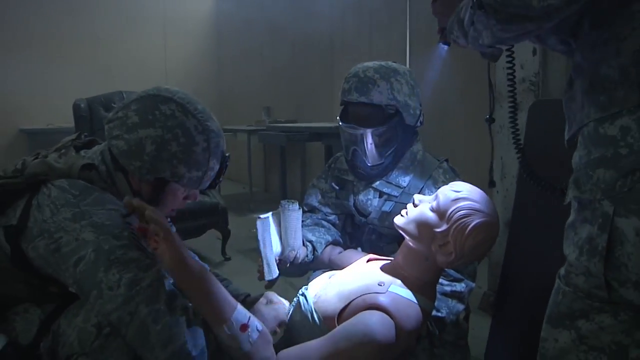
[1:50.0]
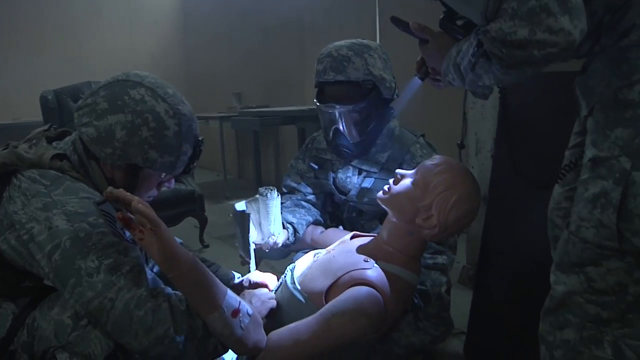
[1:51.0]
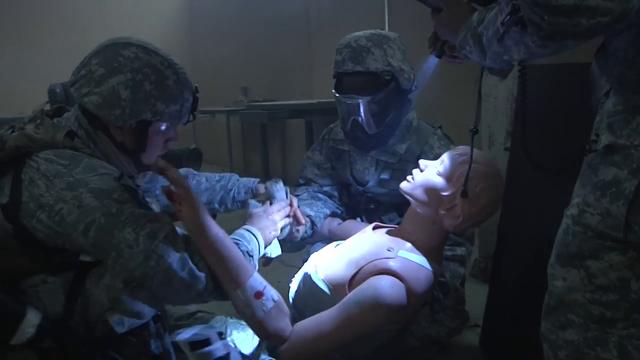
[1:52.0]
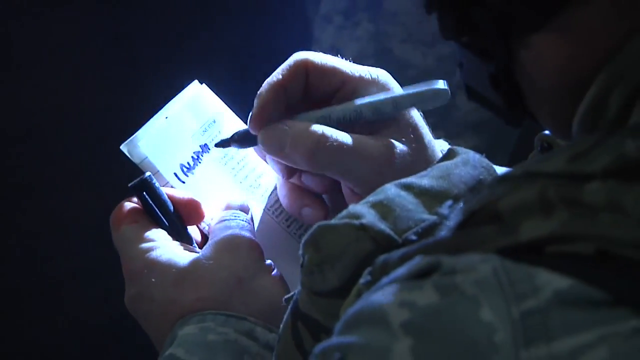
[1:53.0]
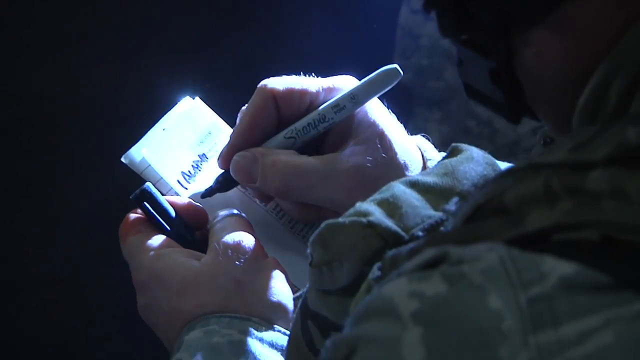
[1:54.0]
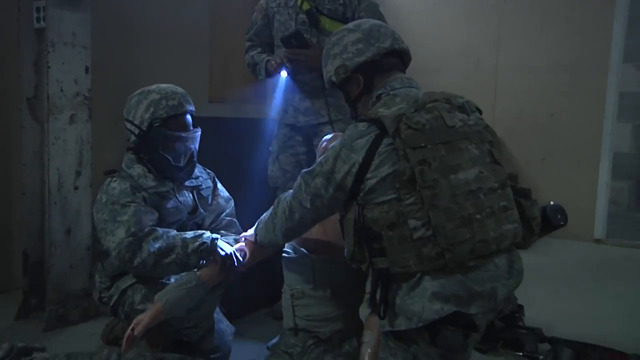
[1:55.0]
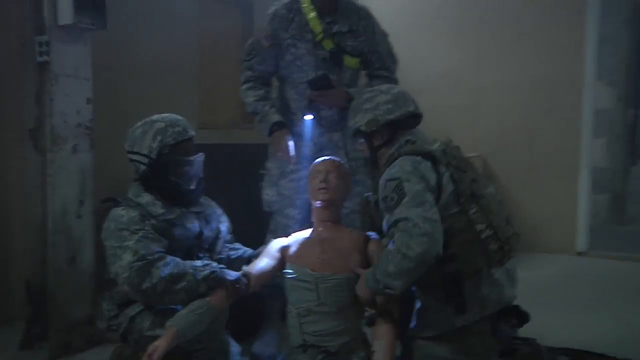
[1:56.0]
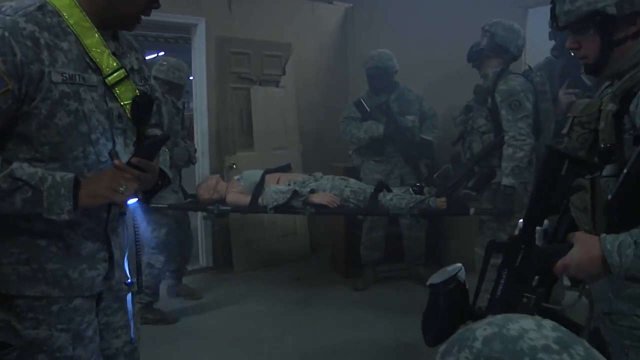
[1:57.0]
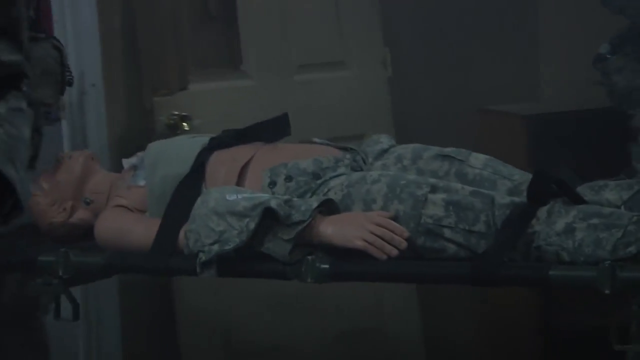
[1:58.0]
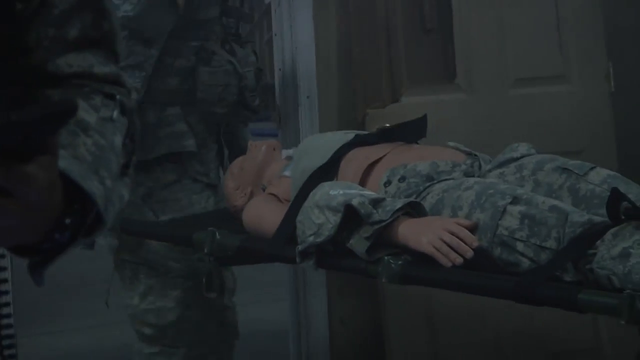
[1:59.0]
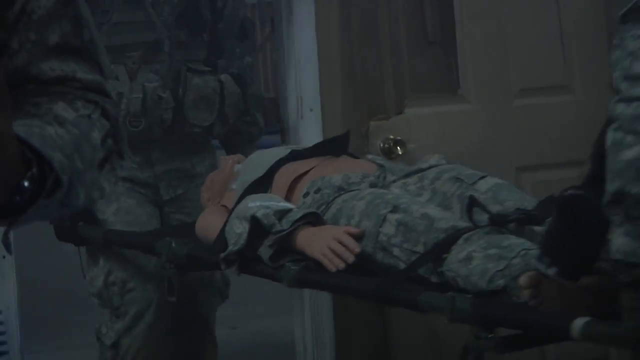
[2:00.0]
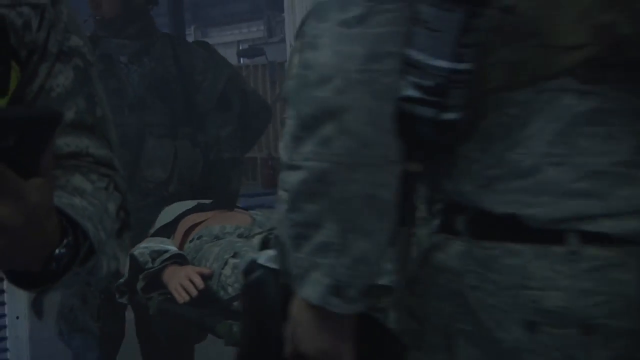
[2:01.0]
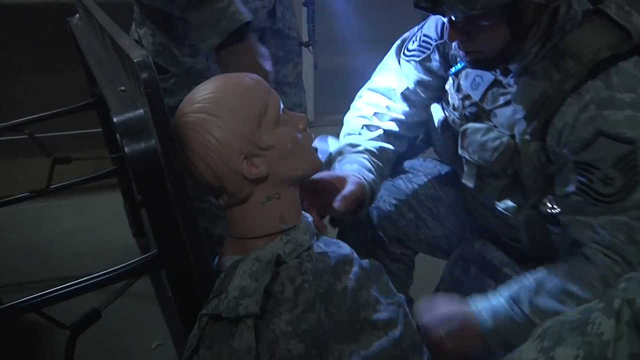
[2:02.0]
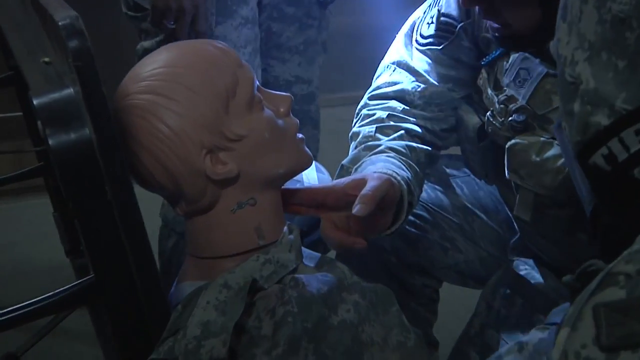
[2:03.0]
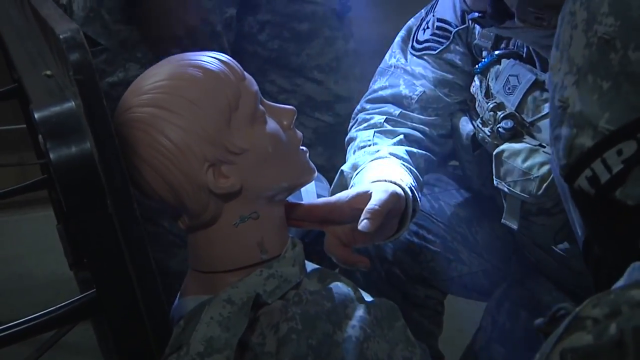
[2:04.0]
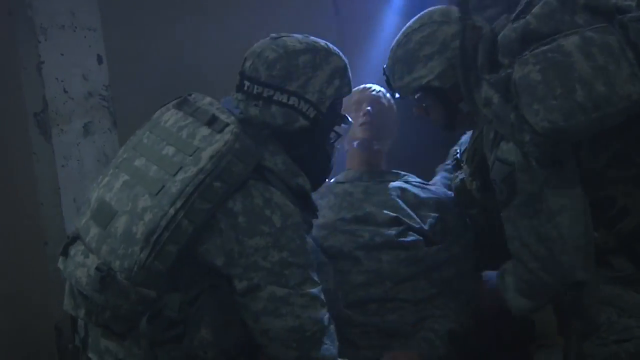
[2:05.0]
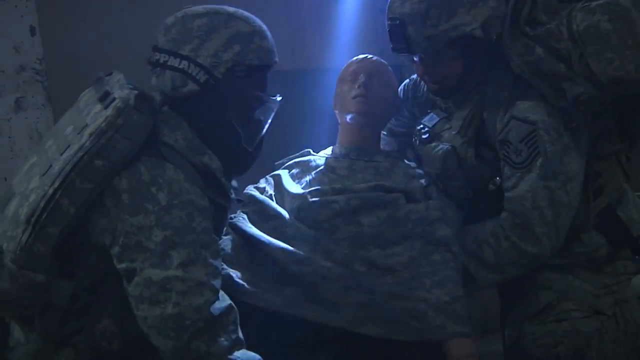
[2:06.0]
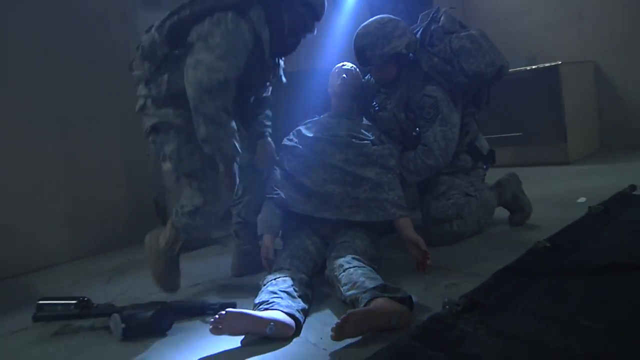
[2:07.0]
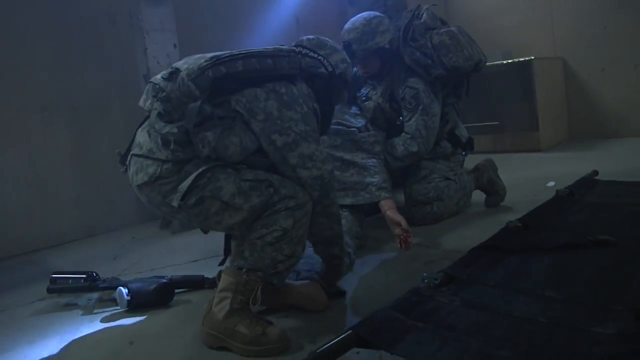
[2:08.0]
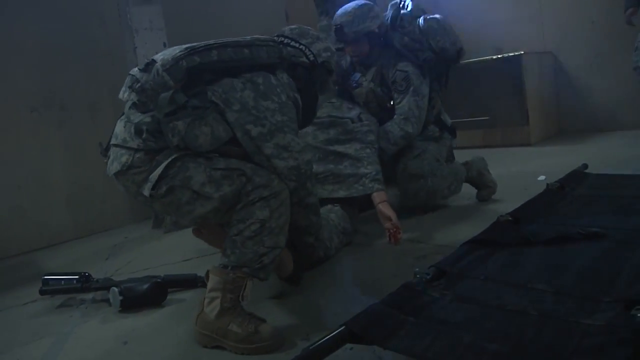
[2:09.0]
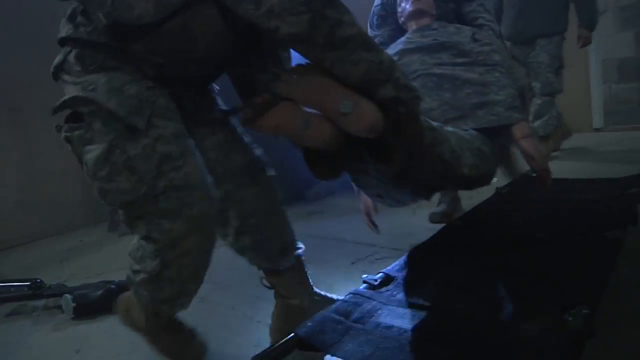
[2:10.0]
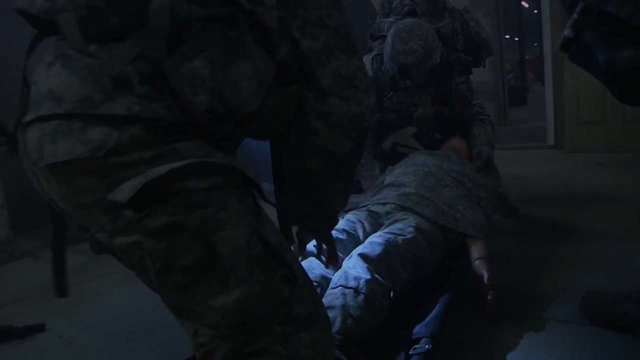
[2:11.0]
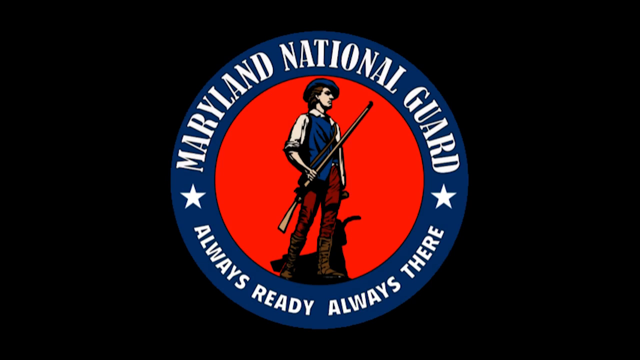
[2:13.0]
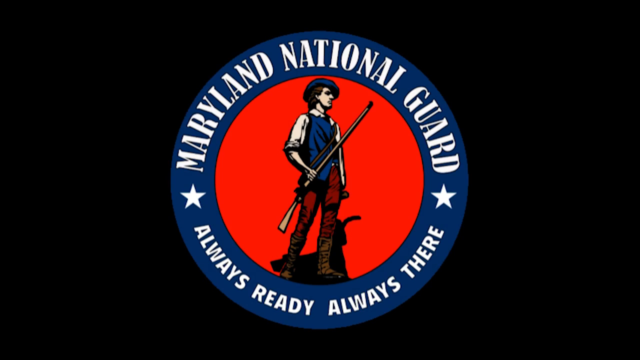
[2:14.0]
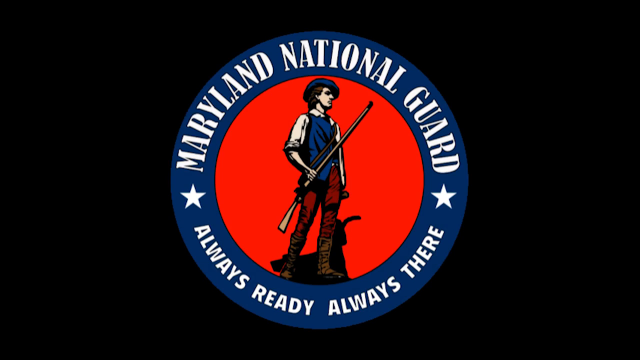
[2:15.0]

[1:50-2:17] Three soldiers attend to the wounded soldier while a fourth stands nearby holding a torch for them. Another soldier holds a paper and a marker and writes on the paper. The three soldiers continue to assist the wounded soldier as they lift him up; more soldiers come, they put him on a stretcher and carry him out of the door. They lay him down and put him in a sitting position. One of the soldiers kneels next to him and puts two fingers on his neck to feel for a pulse. Then they lift him up, carry him and put him back on the stretcher. A logo appears and the video ends.